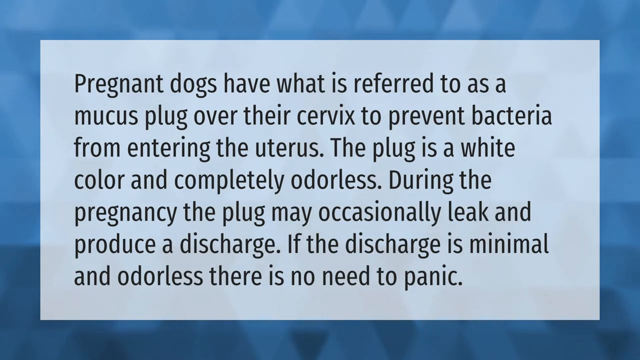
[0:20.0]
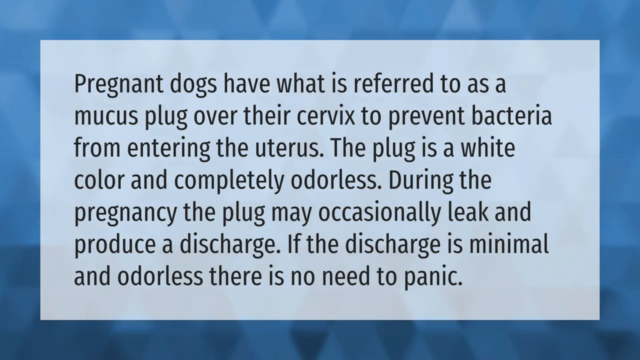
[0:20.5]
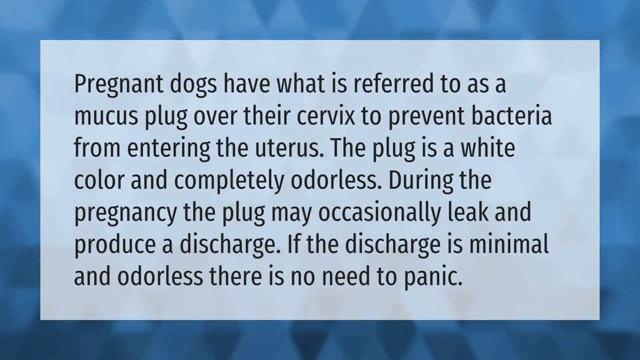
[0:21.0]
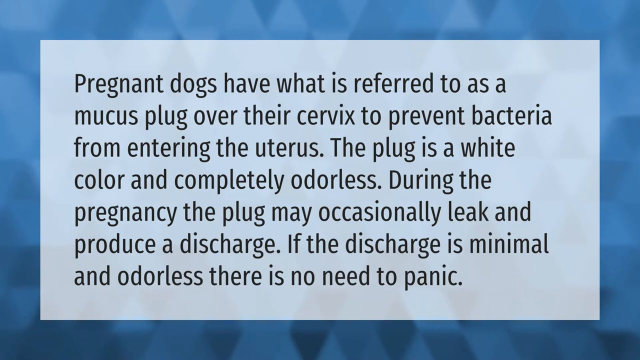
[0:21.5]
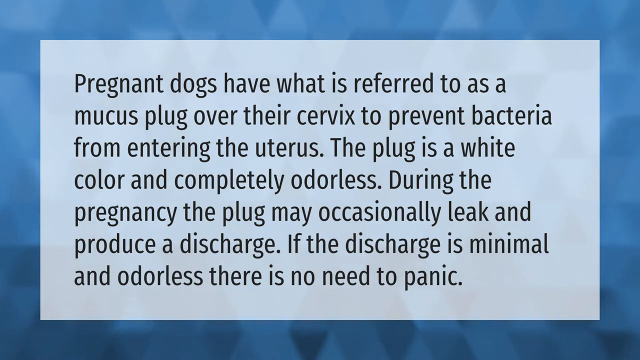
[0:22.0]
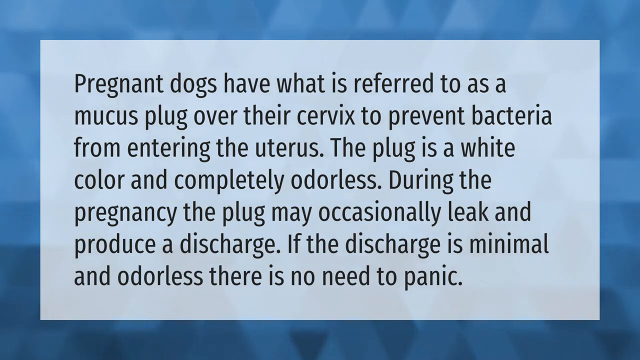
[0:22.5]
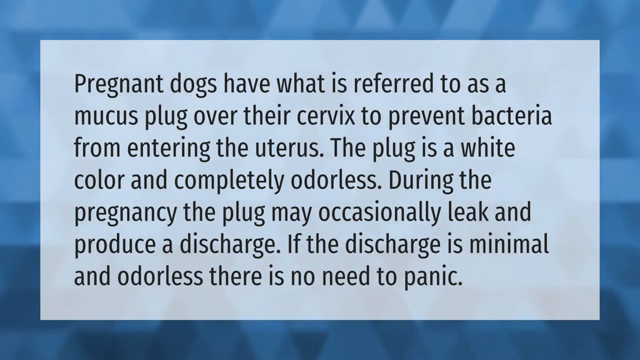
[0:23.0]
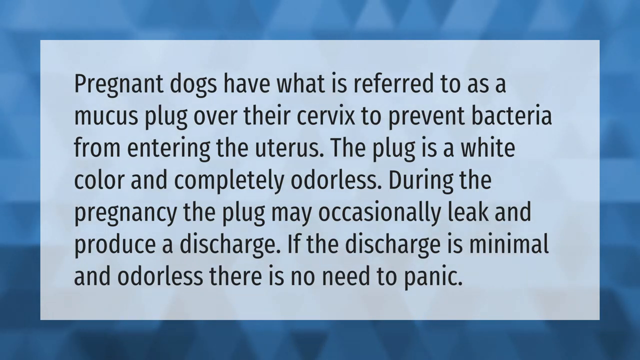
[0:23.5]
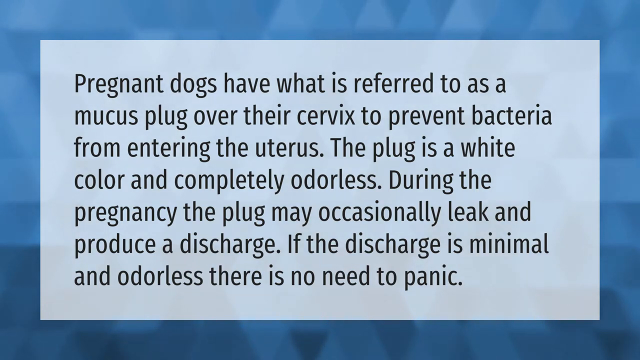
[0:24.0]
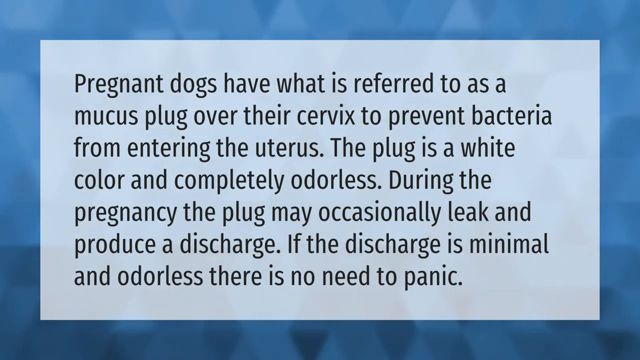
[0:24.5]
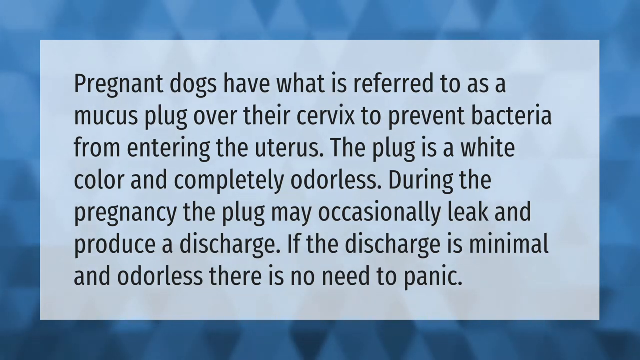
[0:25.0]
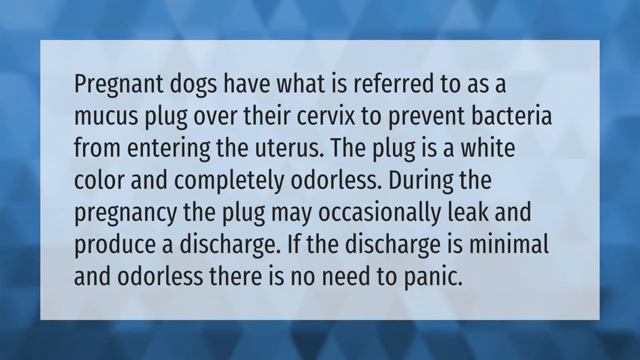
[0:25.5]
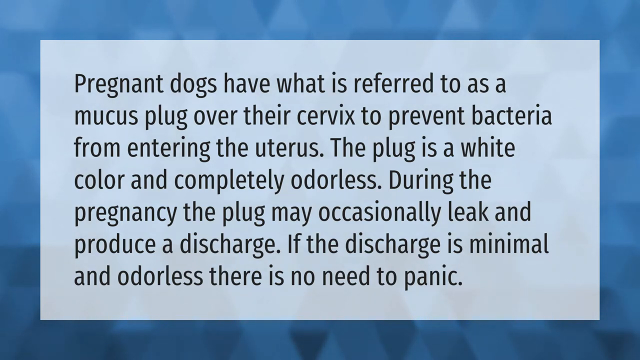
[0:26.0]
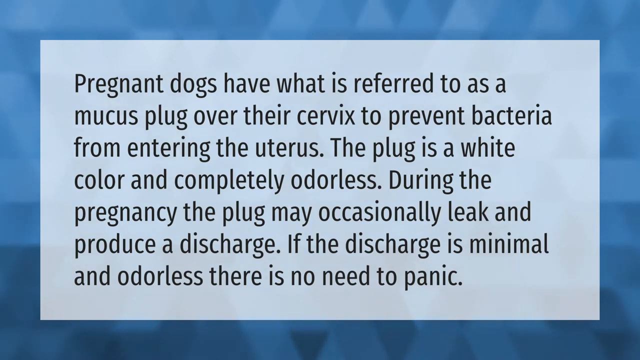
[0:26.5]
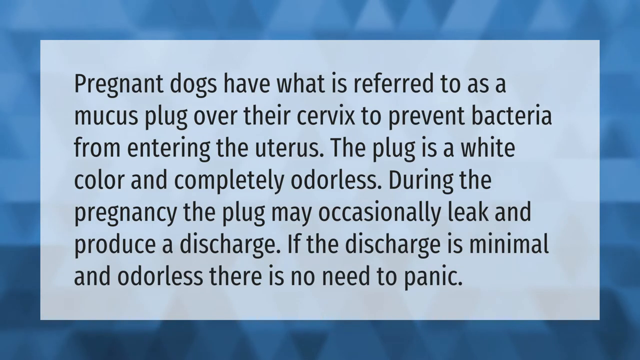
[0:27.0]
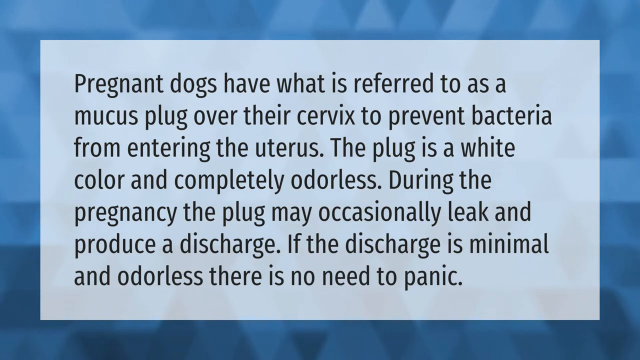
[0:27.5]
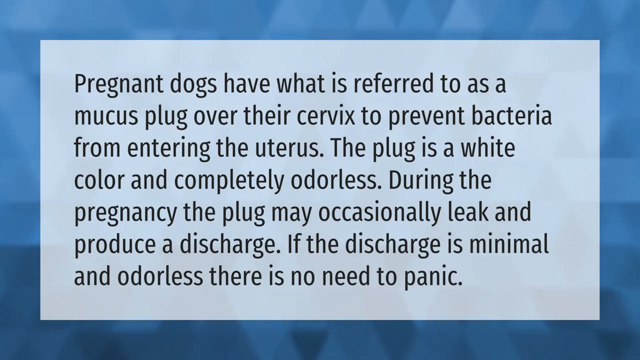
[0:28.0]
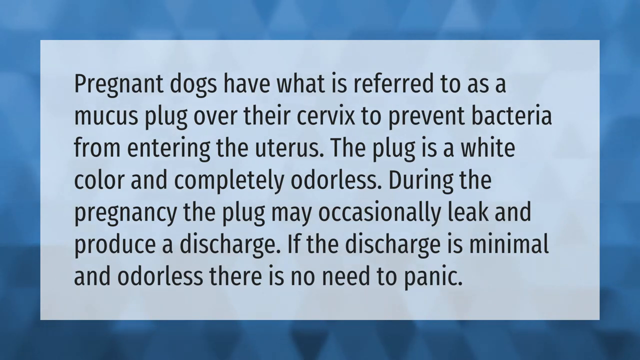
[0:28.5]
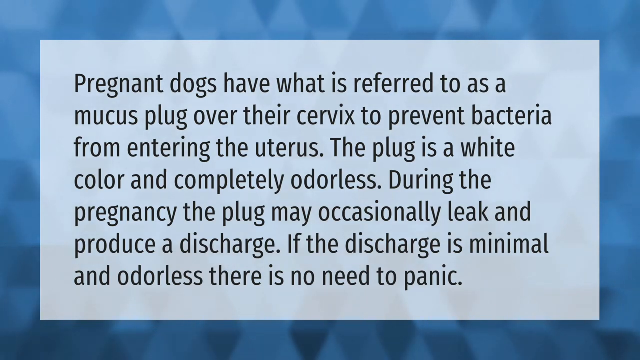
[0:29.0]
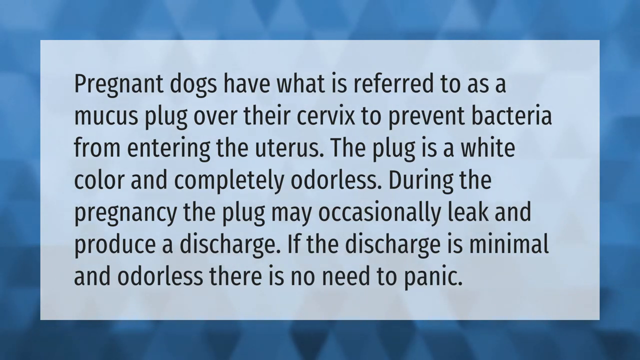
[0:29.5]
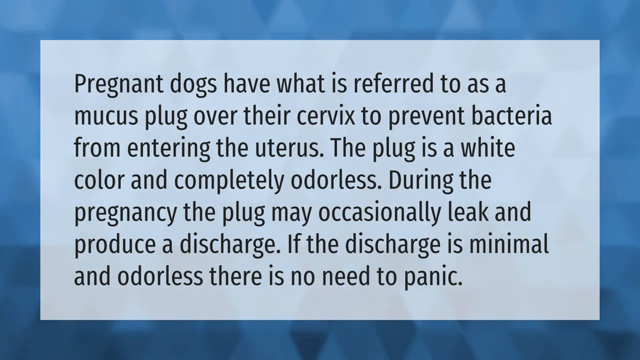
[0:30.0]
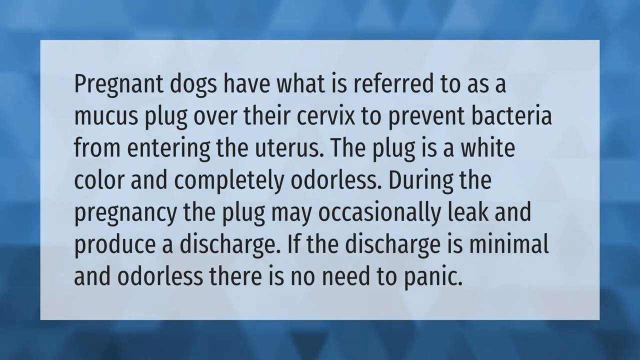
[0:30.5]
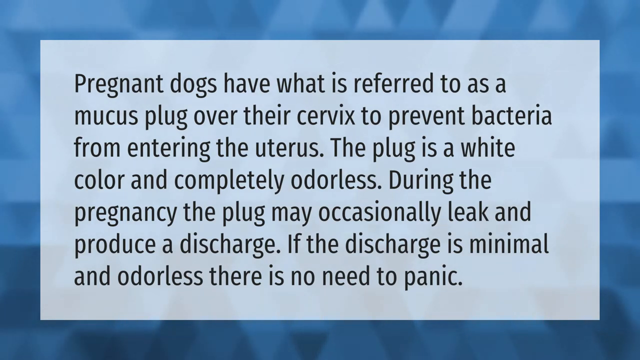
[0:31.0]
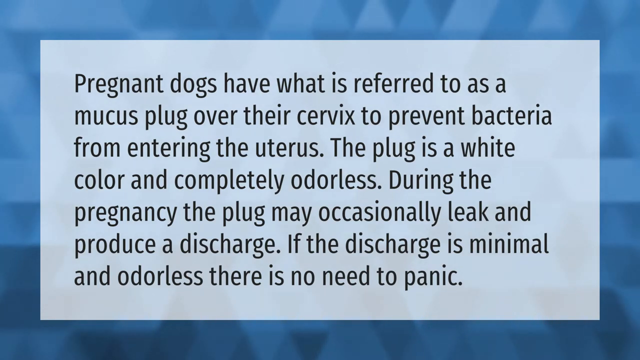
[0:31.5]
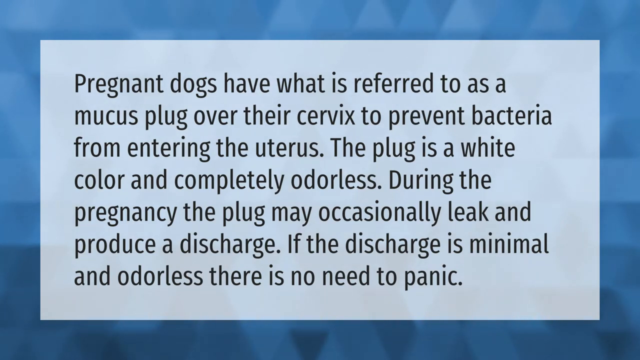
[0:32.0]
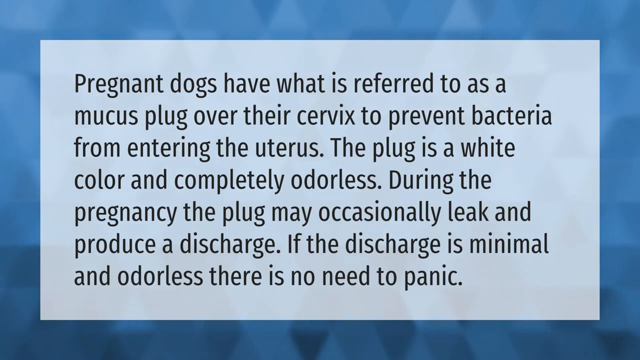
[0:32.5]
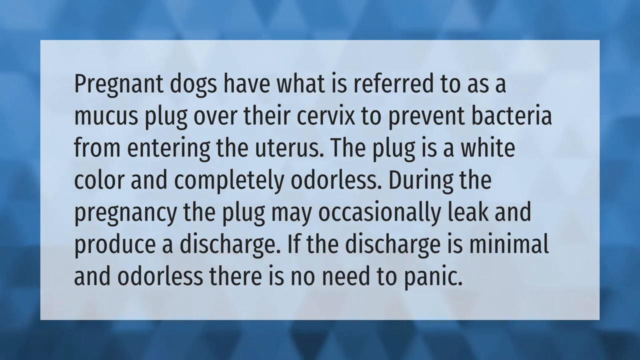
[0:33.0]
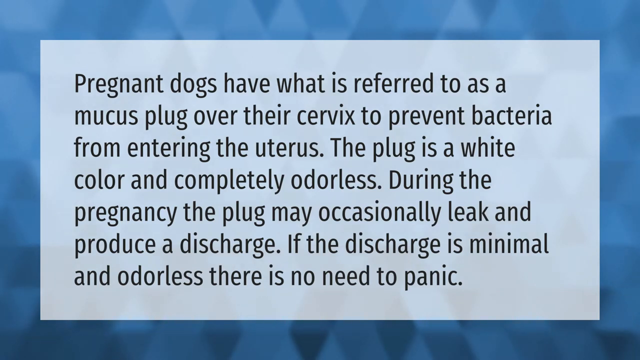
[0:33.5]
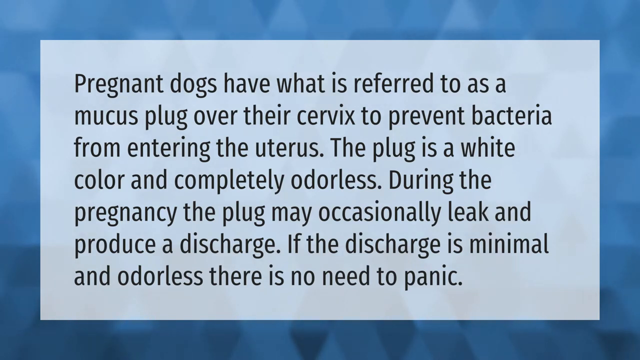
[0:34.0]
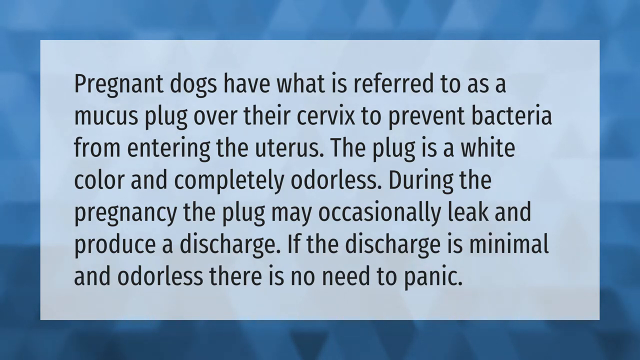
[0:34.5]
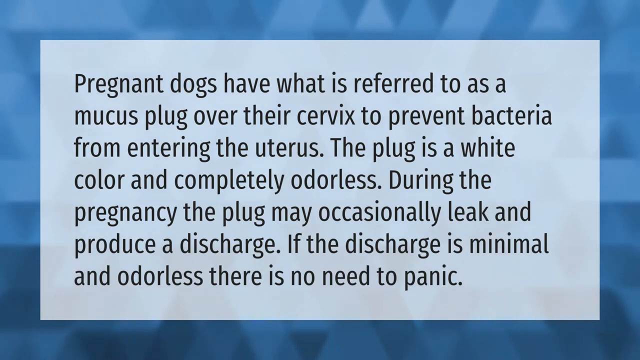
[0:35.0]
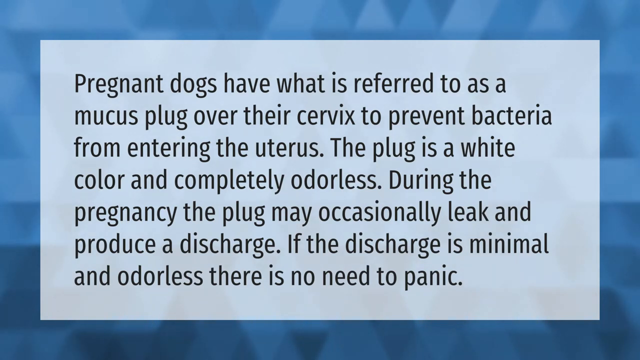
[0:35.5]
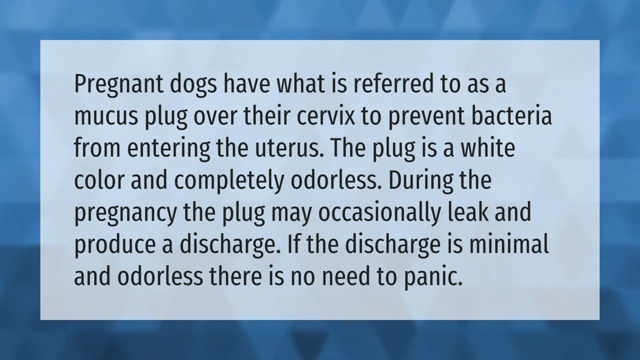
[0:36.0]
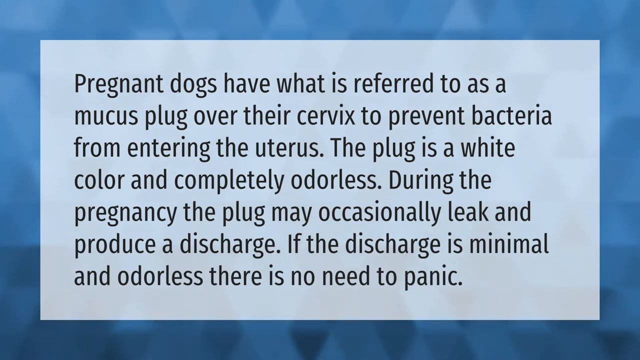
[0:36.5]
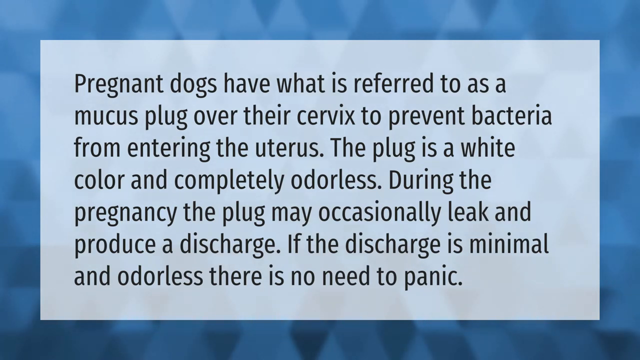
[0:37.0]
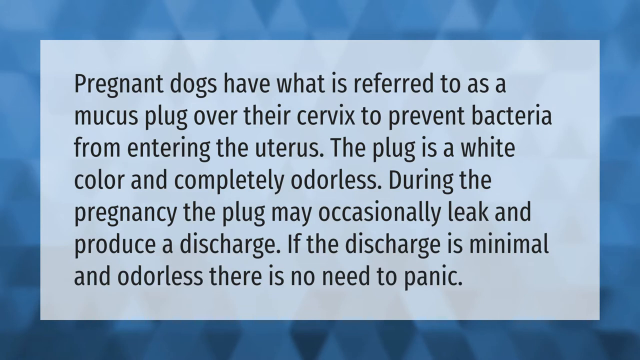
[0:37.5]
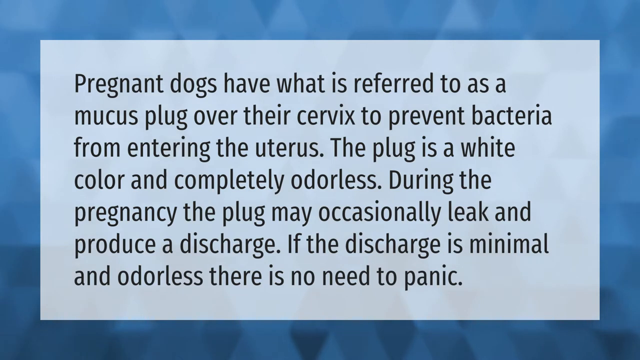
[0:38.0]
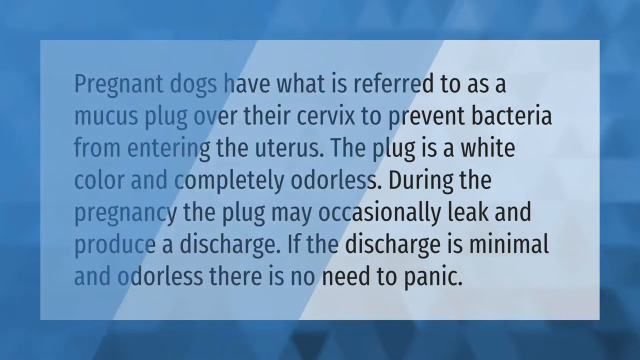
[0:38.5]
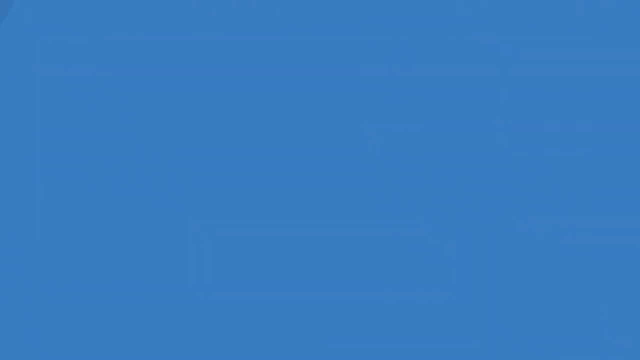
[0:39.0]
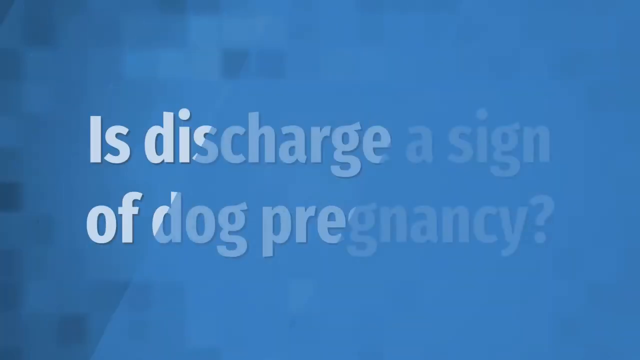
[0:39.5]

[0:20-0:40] The dark blue screen with a lighter blue square on top continues to read "pregnant dogs have what is referred to as a mucus plug over their cervix to prevent bacteria from entering the uterus. The plug is a white color and completely odorless. During the pregnancy, the plug may occasionally leak and produce a discharge. If the discharge is minimal and odorless, there is no need to panic." It then changes to another blue screen that reads "is discharge a sign of dog pregnancy." The screens are all on a blue background with what look like darker diamond or square shapes.